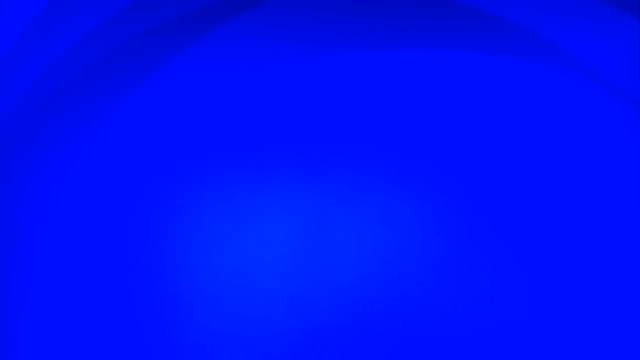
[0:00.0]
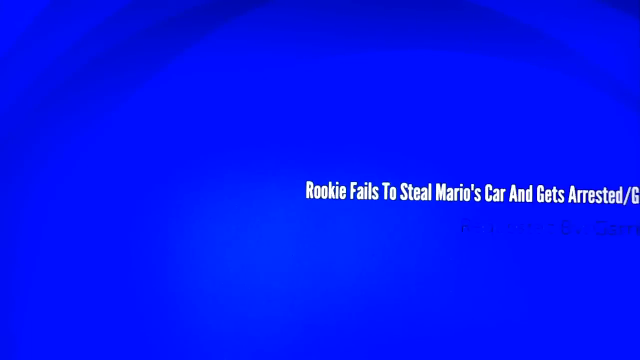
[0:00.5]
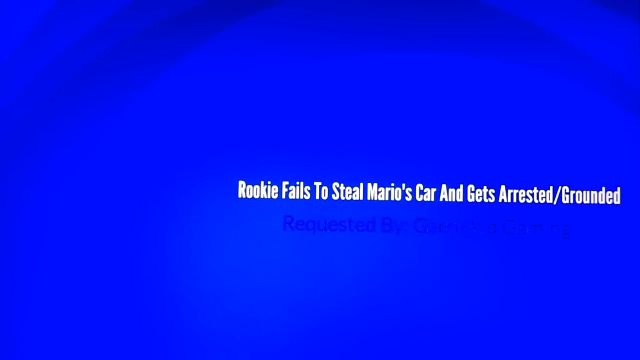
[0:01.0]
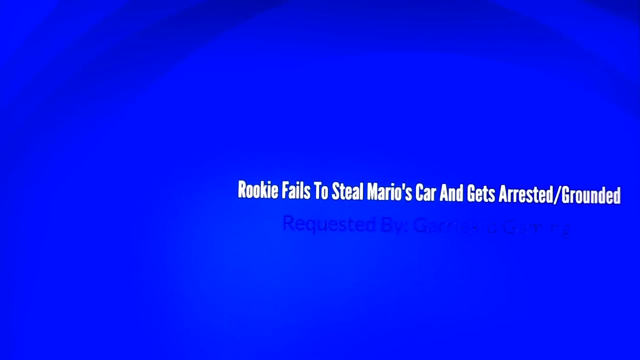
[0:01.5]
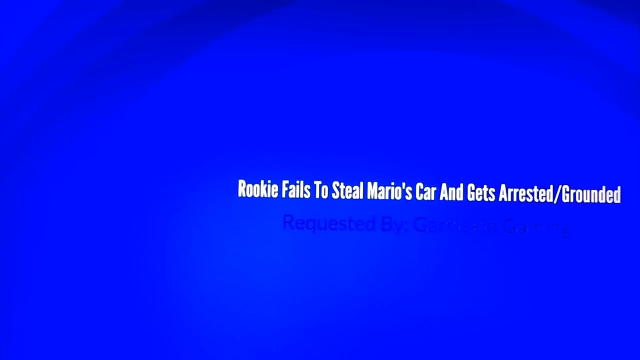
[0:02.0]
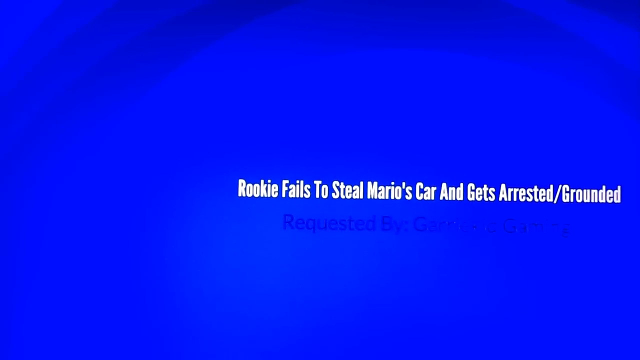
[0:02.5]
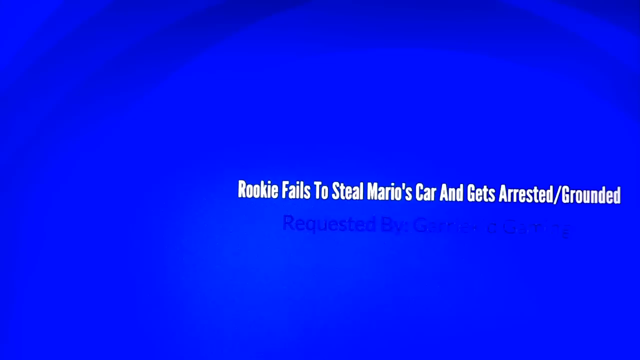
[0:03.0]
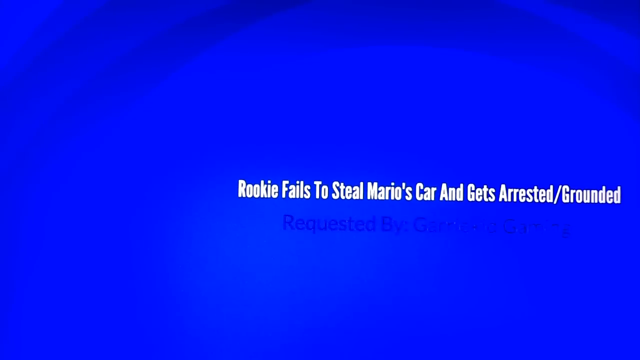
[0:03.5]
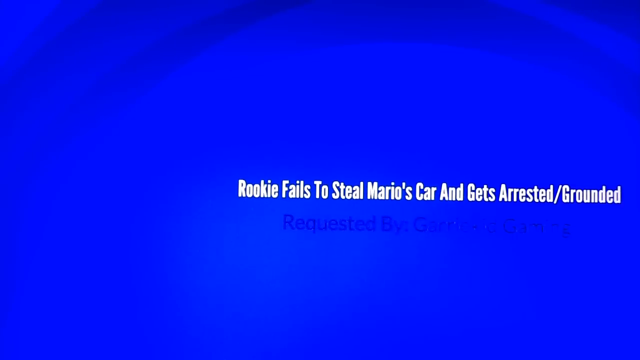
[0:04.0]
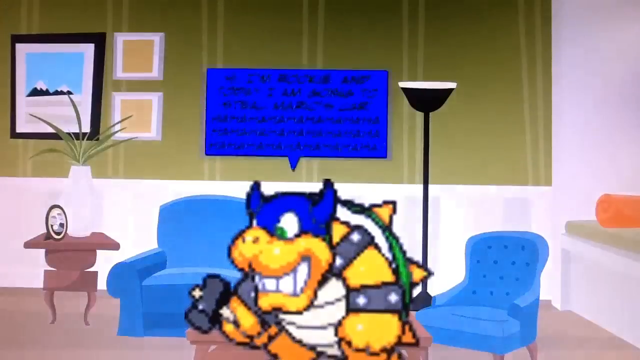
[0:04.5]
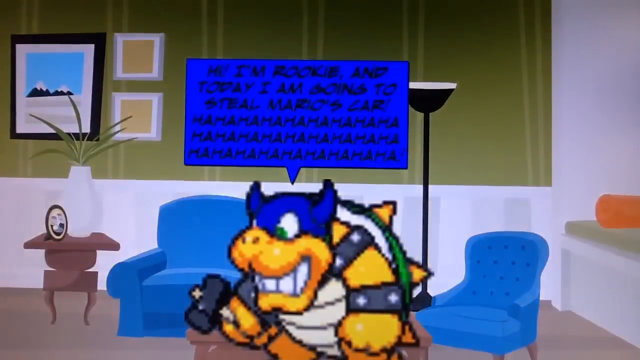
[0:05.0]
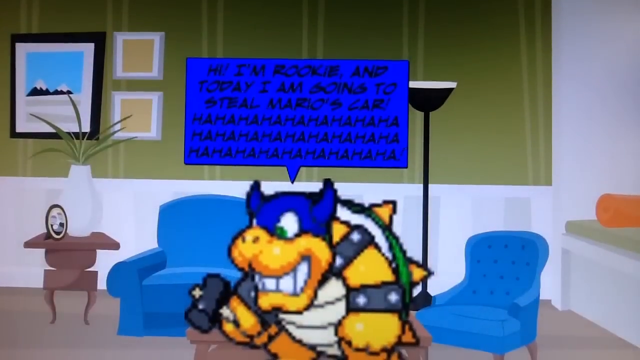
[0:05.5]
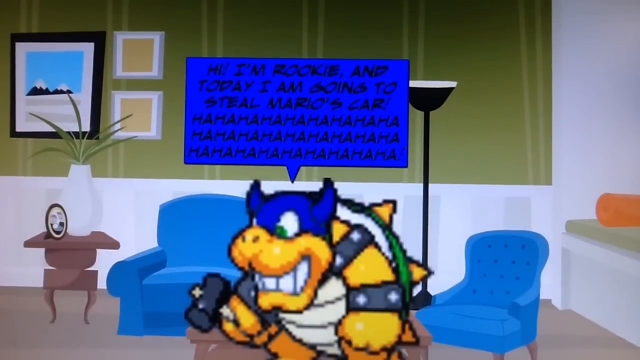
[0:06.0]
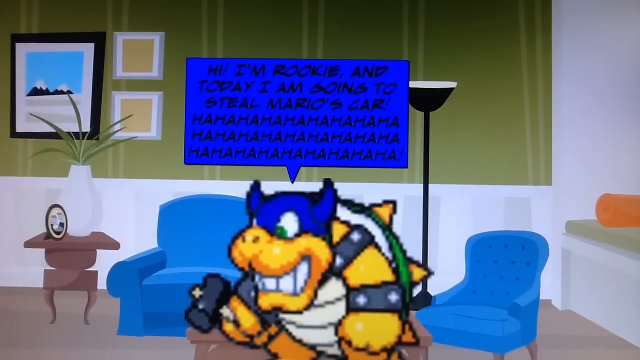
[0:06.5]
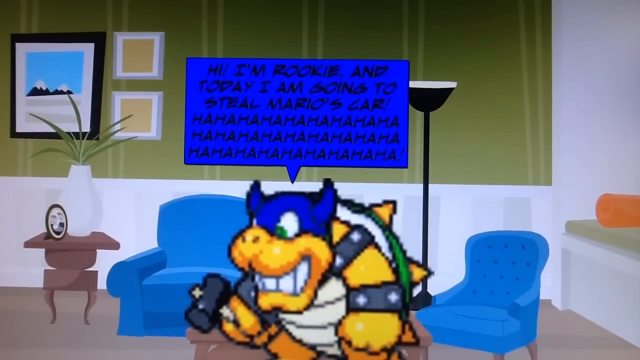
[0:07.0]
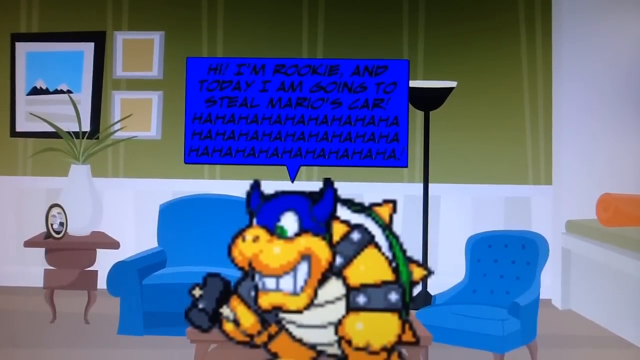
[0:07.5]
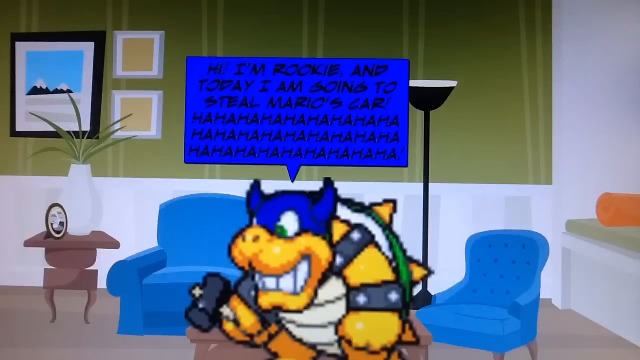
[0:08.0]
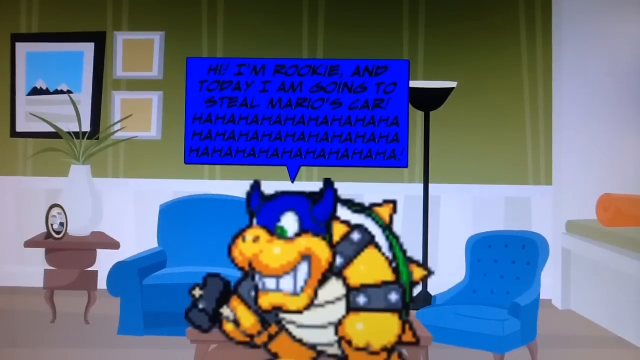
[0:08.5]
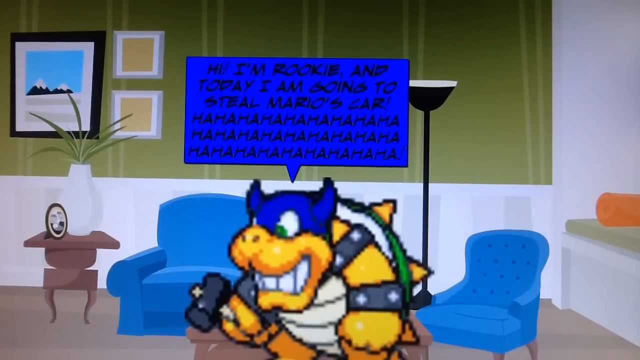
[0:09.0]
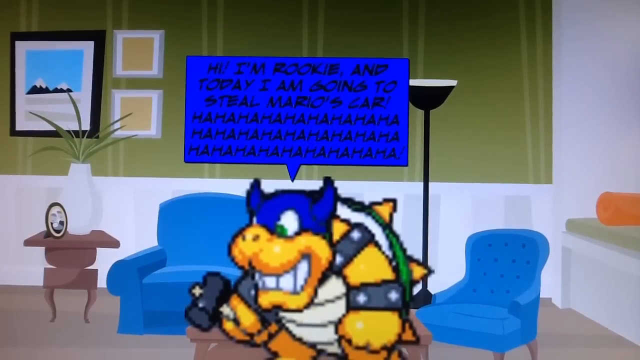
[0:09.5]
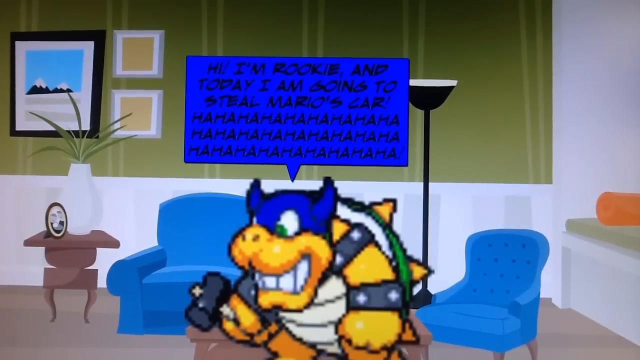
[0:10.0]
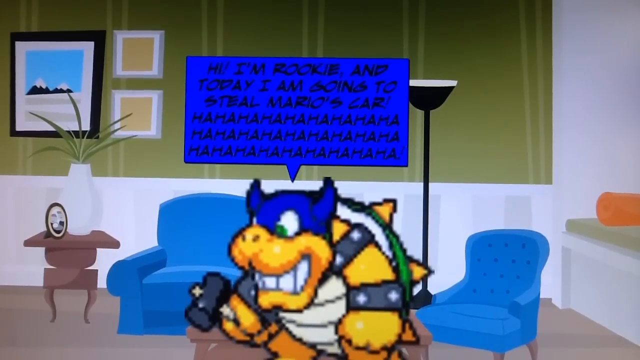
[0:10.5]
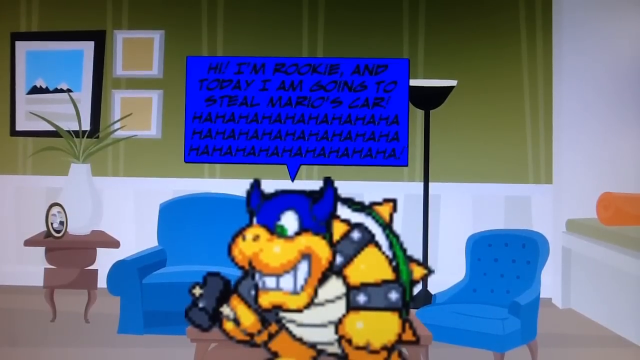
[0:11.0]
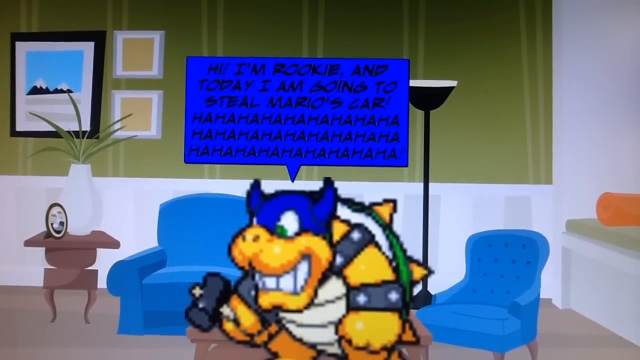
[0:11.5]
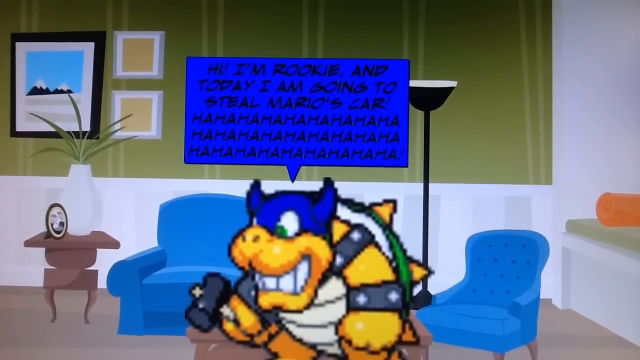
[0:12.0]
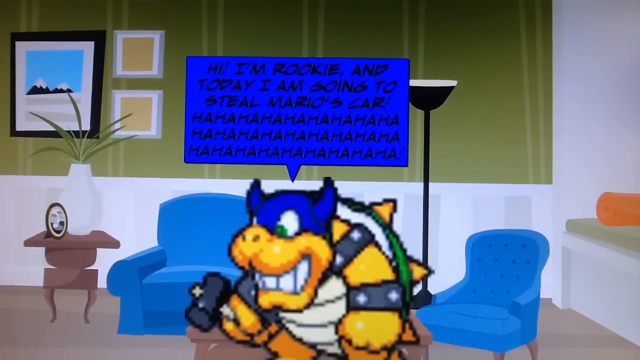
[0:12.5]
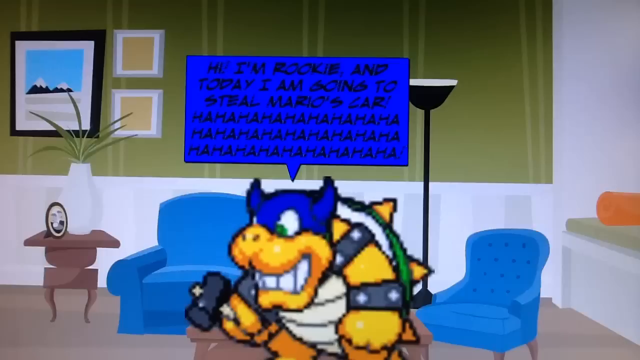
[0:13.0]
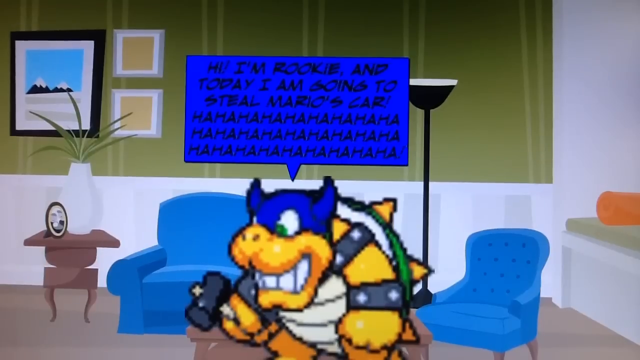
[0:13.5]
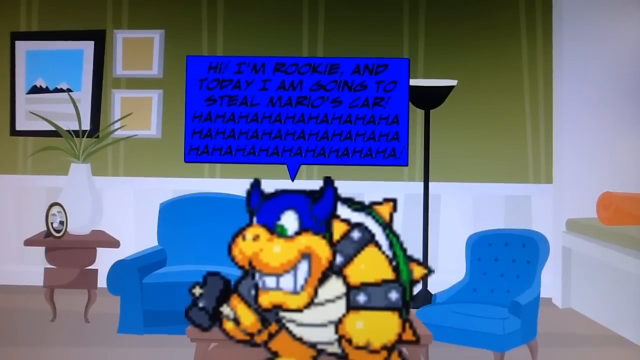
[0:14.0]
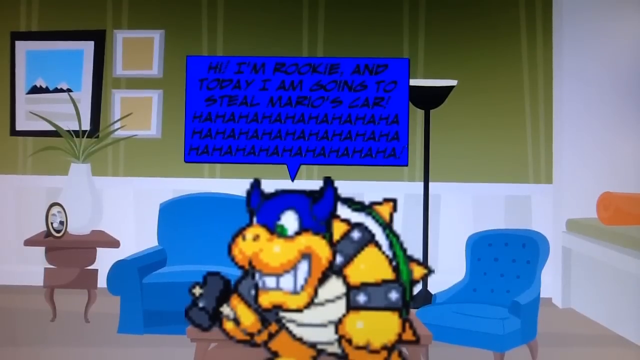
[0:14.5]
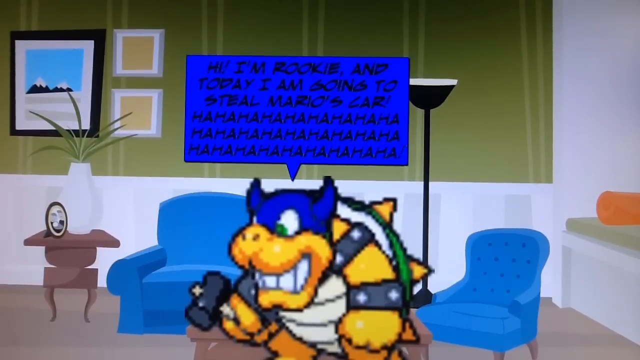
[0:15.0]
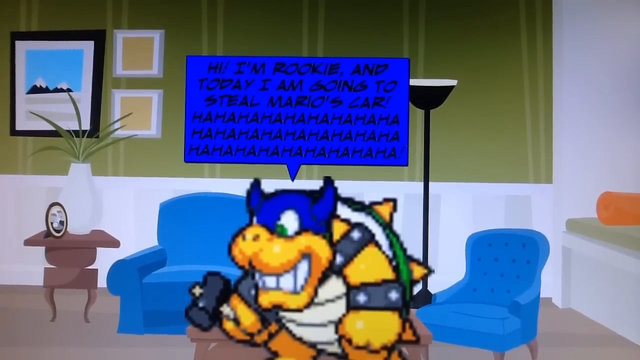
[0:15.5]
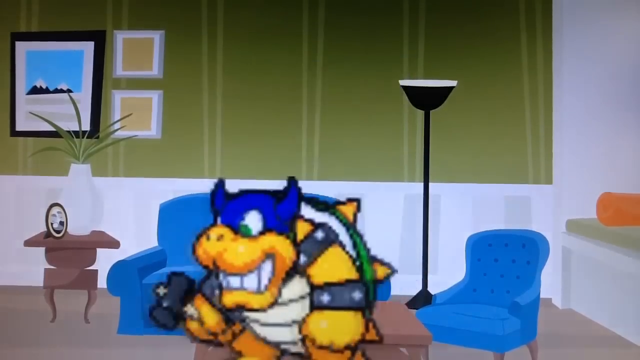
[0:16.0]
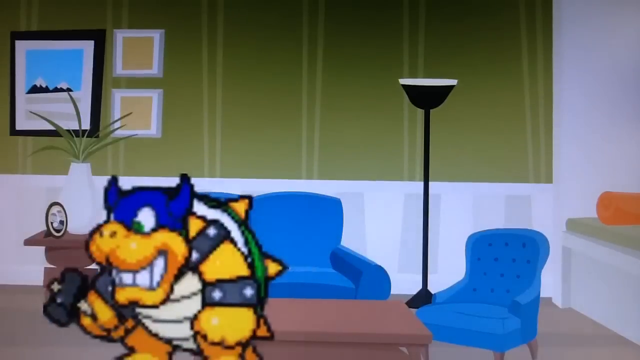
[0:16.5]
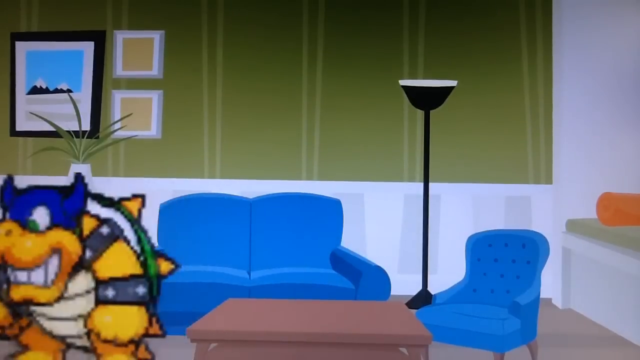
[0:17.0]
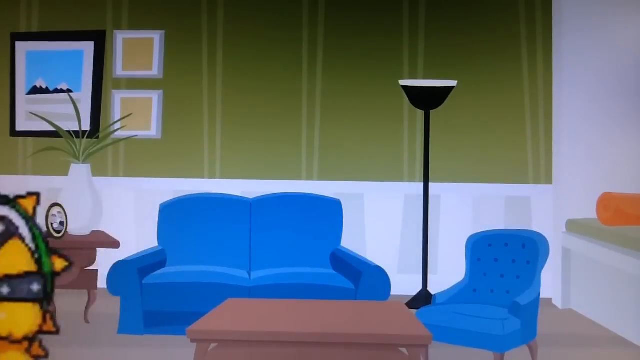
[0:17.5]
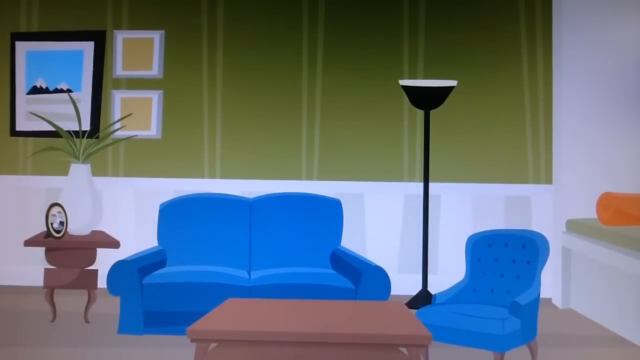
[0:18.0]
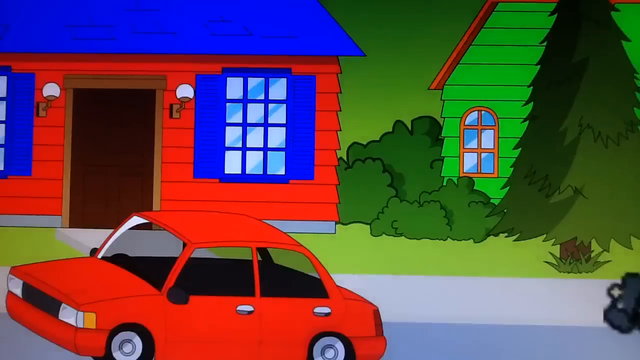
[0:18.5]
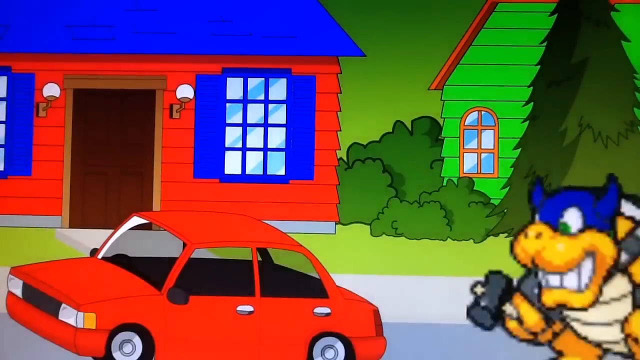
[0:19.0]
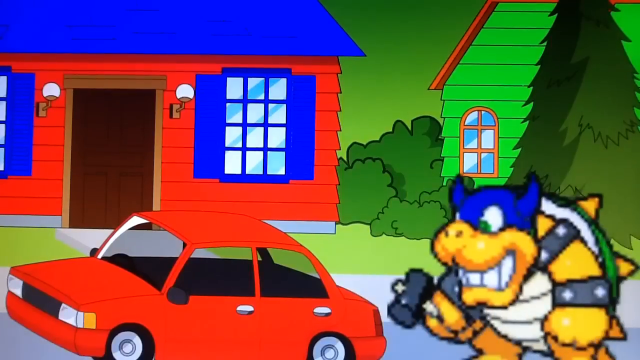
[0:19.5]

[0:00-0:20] The video opens on a blue background, and text slides in from the right toward the middle of the screen: "Rookie fails to steal Mario's car and gets arrested/grounded." The video is animated, with a basic drawn background that looks like the inside of a study or office. The wall appears white with a greenish inset with pinstripes, possibly meant to be wallpaper, and there is trim along the lower half of the wall. On the wall is what looks like a picture or article showing a snow-covered mountain range and a blue sky in a black frame, along with two other smaller framed items. A brown side table is next to a blue lounge chair; it has a white base with some plantings in it. There is another, smaller blue chair, and to the right what looks like perhaps a bench or table with what looks like a cushion of some sort on top. A character appears wearing a blue helmet or mask with horns. Most of his face is yellow, with white teeth; he has a yellow body, spikes on his back, leather straps on his arm, and what looks like a hammer. He says, "Hi, I'm Rookie, and today I'm going to steal Mario's car. That's all for this episode. Thanks for watching!"